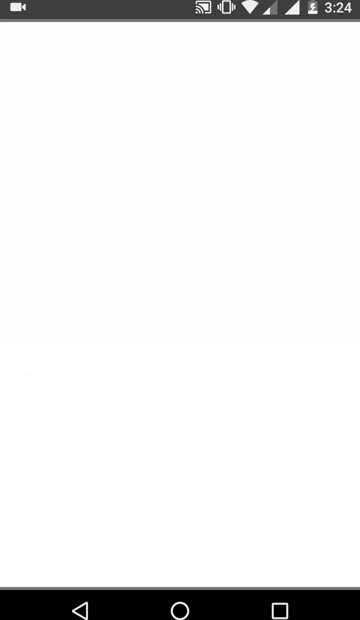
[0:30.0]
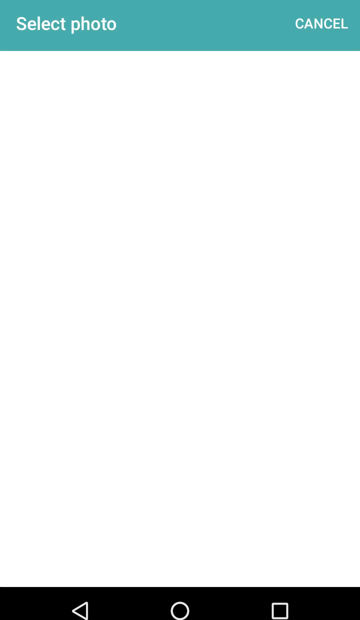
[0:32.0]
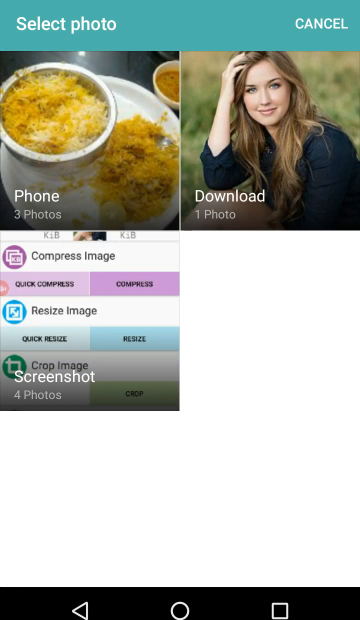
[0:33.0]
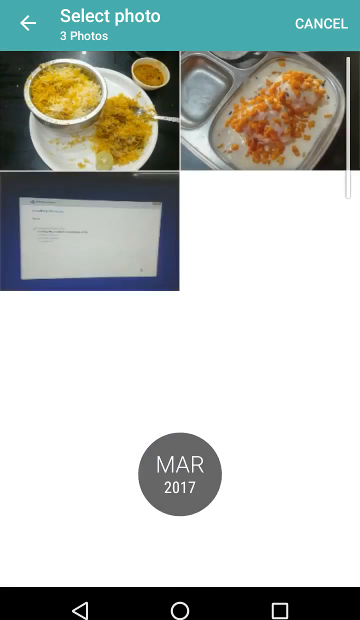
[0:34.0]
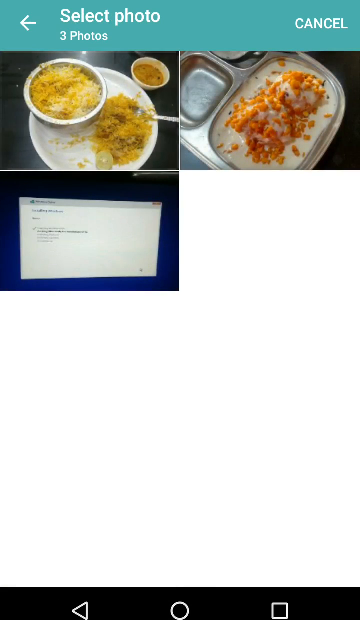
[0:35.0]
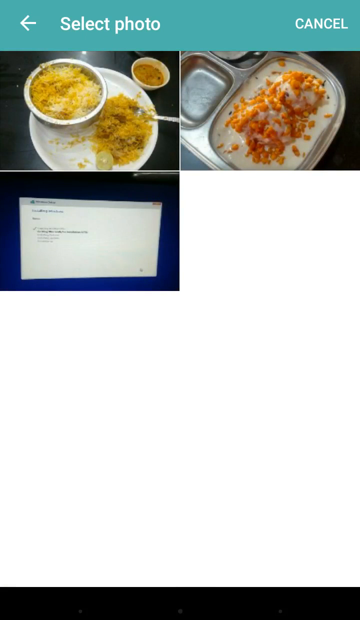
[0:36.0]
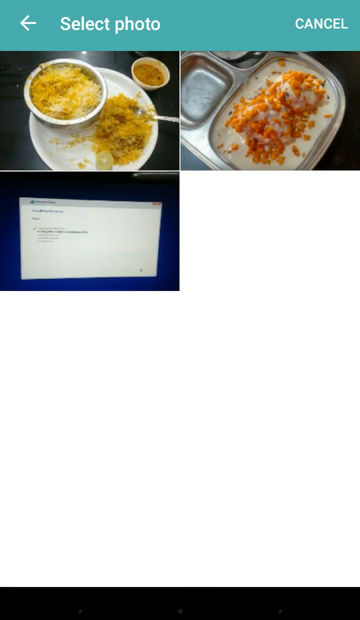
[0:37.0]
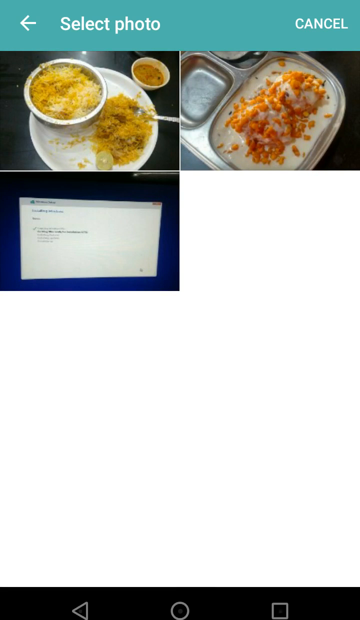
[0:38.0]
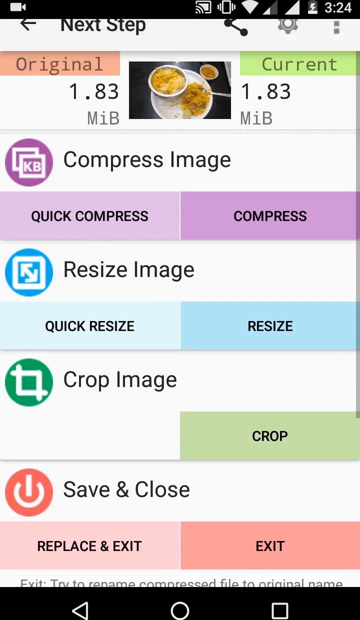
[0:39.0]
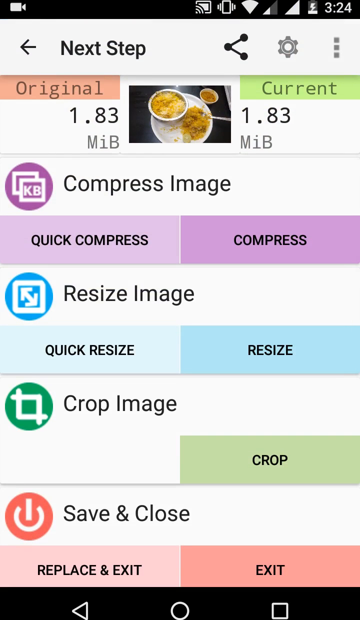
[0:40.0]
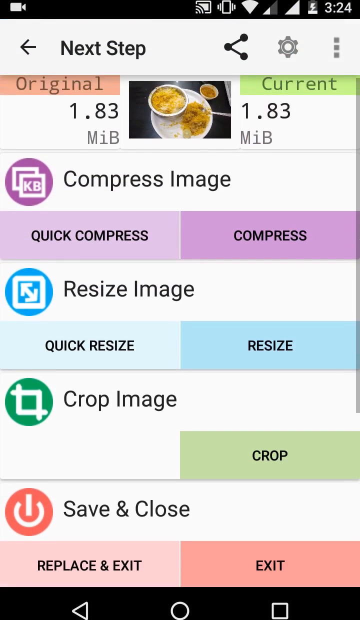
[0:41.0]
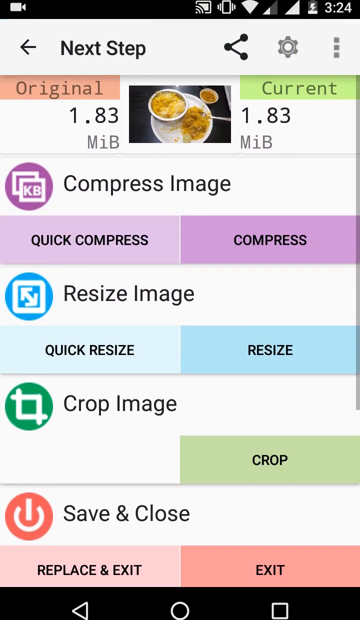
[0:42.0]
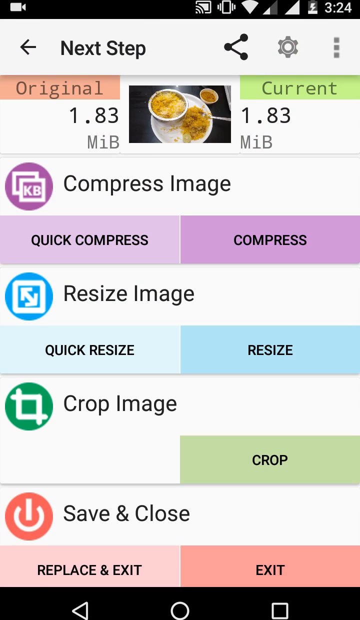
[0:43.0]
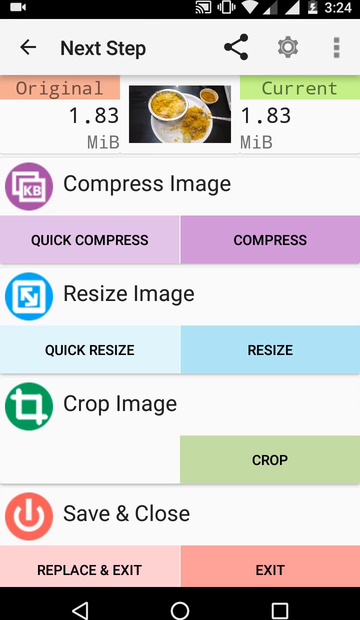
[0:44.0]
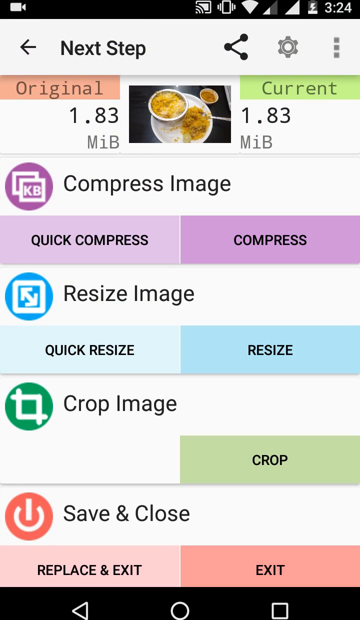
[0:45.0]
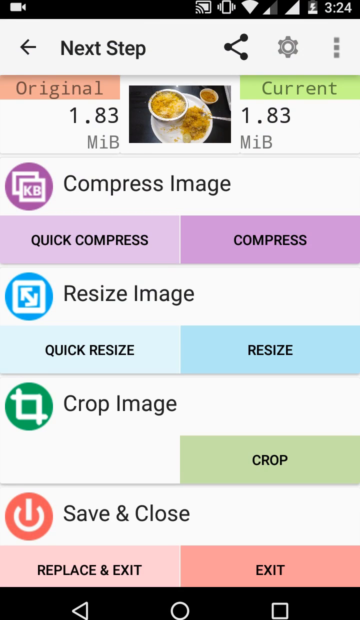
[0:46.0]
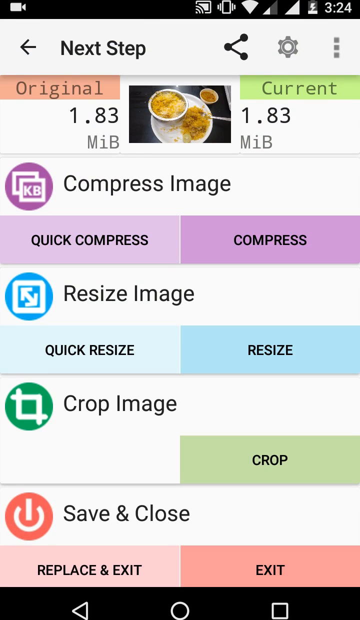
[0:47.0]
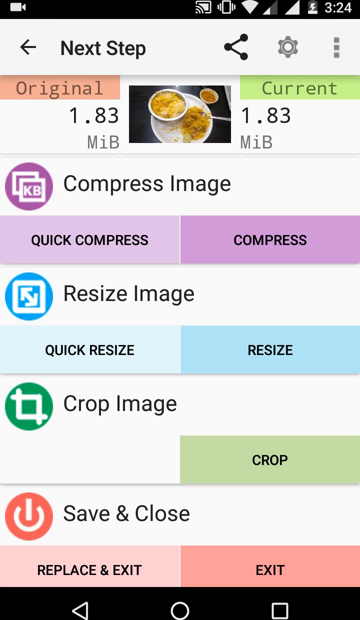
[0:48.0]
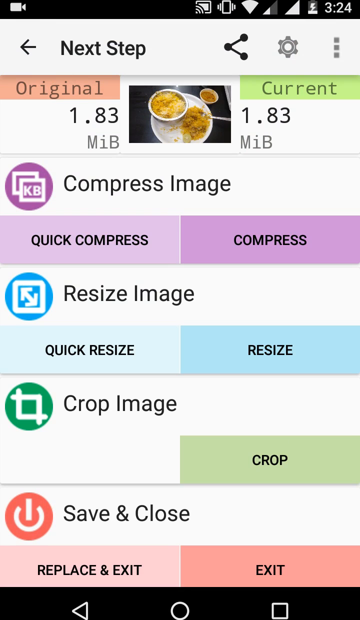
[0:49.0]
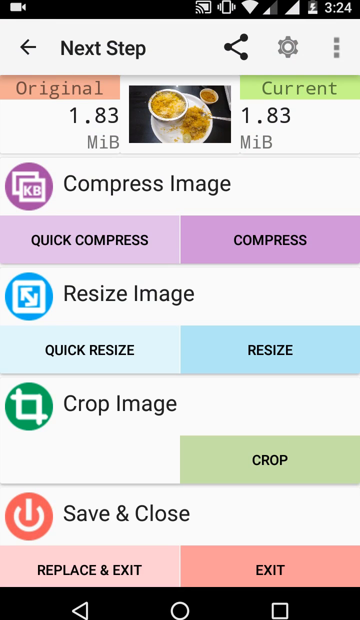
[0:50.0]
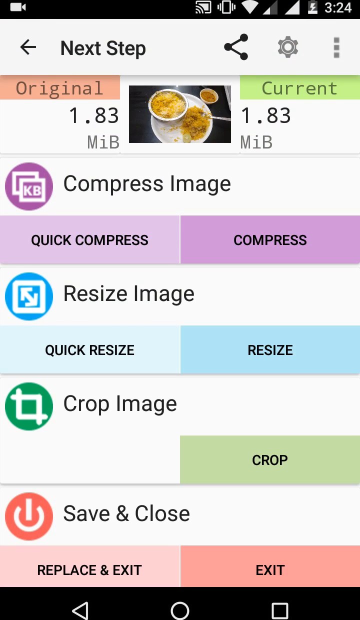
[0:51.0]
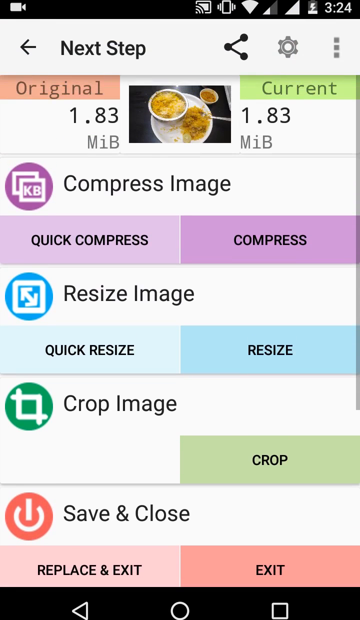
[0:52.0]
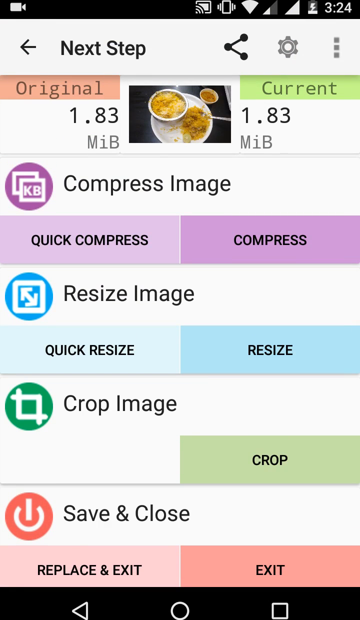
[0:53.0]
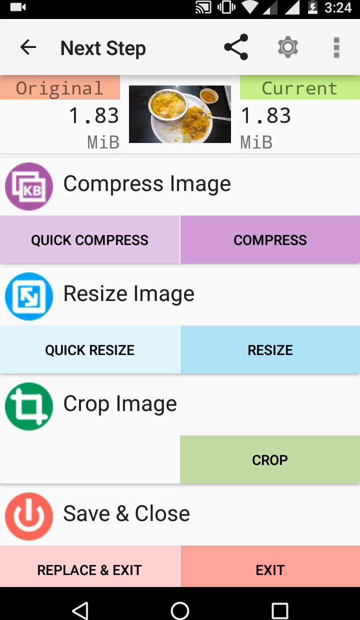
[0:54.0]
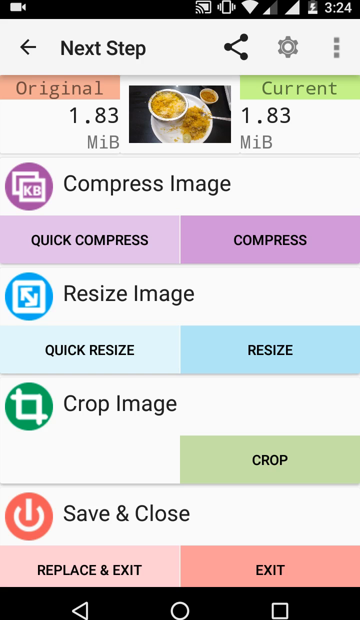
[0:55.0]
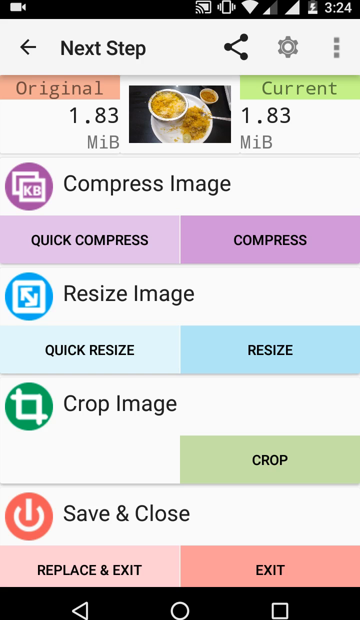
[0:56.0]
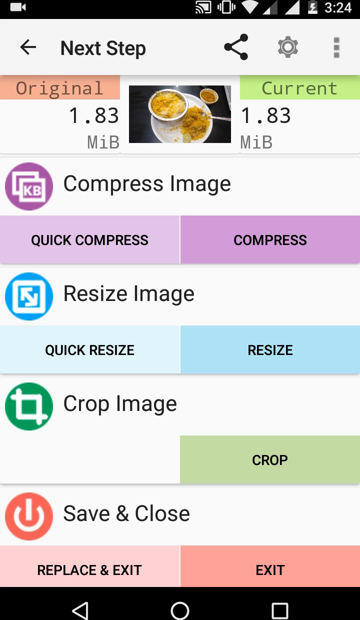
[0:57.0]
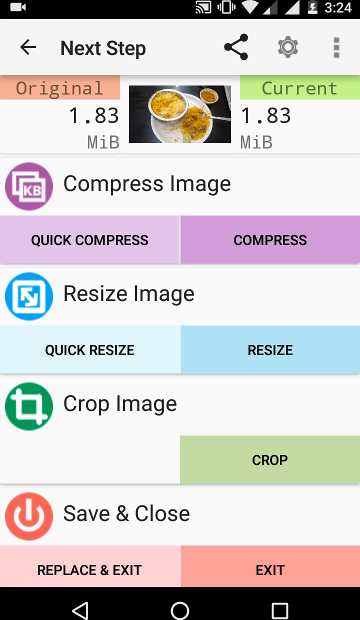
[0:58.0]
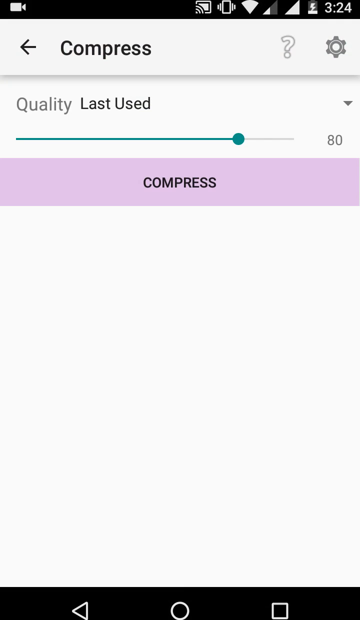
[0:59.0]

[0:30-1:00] The Photo Compress app is shown with its many features. A photo is selected, and then steps appear for compressing the image, resizing it quickly, and copying it, followed by options to save and close or to replace and exit. Different types of images are shown, along with when the app was last used.